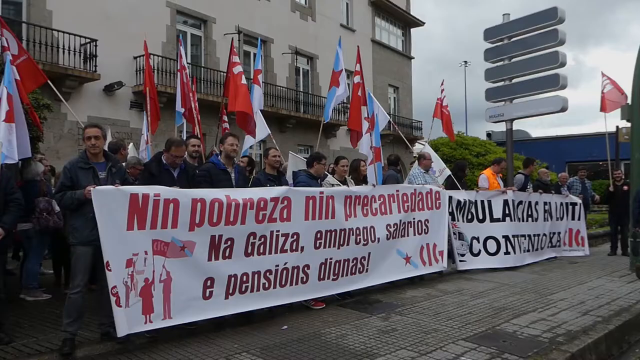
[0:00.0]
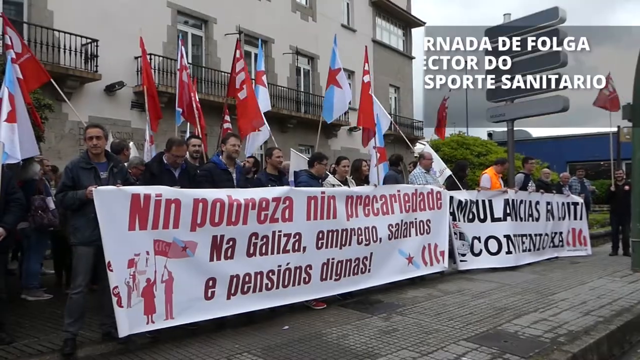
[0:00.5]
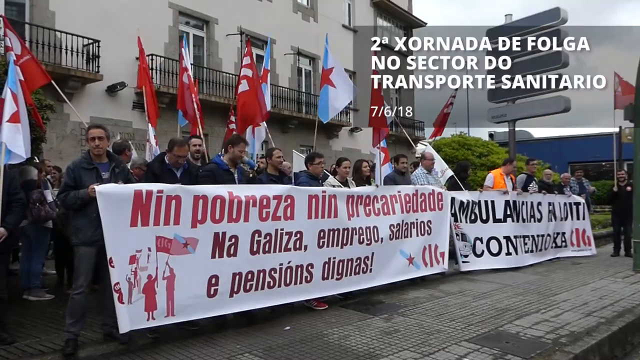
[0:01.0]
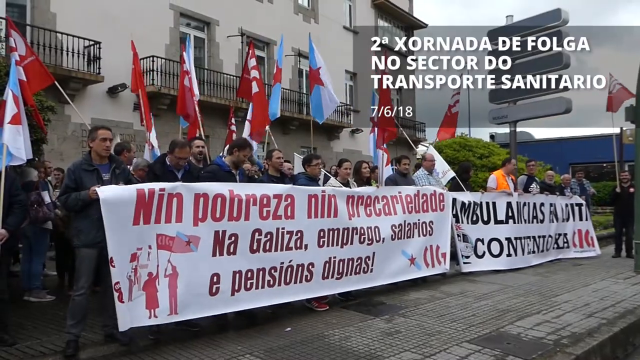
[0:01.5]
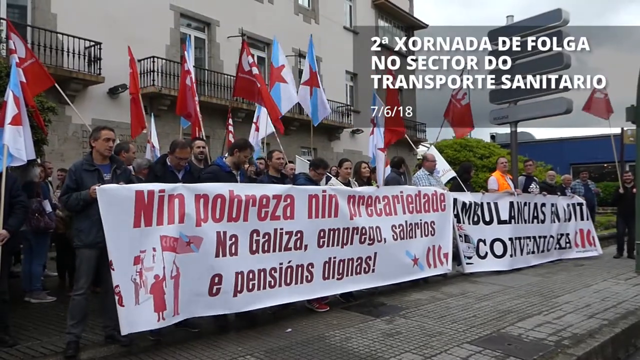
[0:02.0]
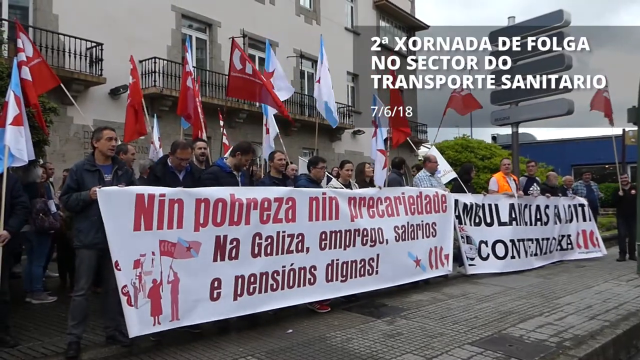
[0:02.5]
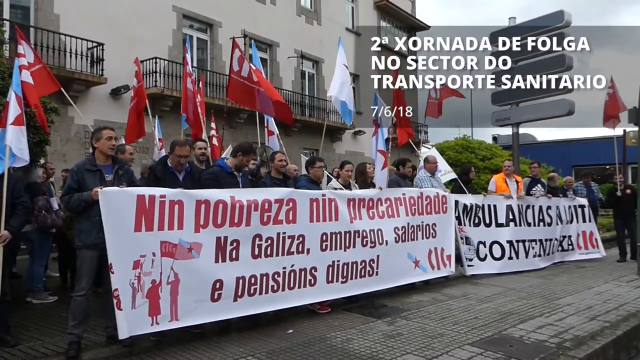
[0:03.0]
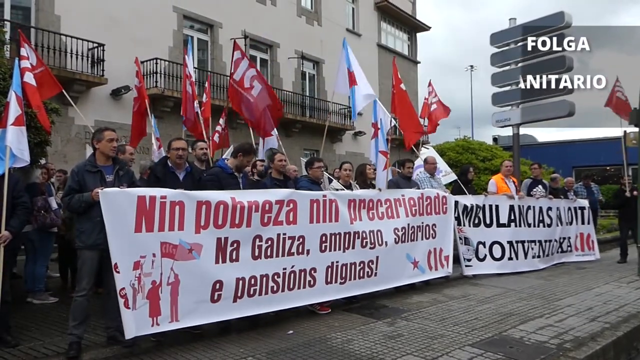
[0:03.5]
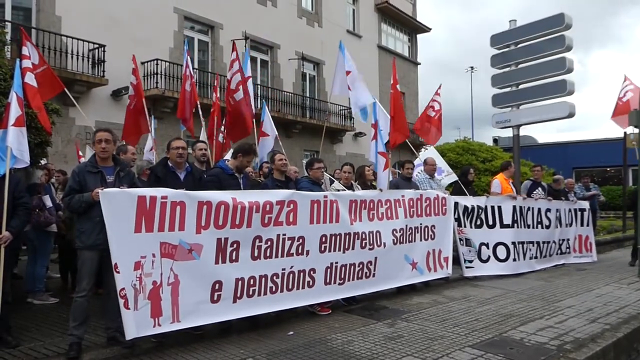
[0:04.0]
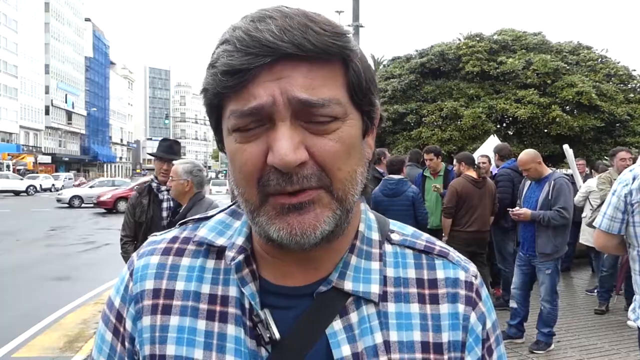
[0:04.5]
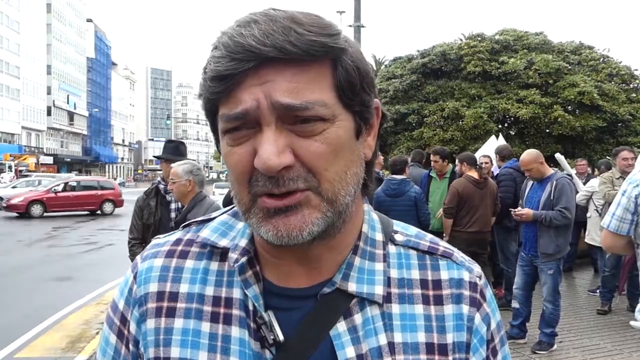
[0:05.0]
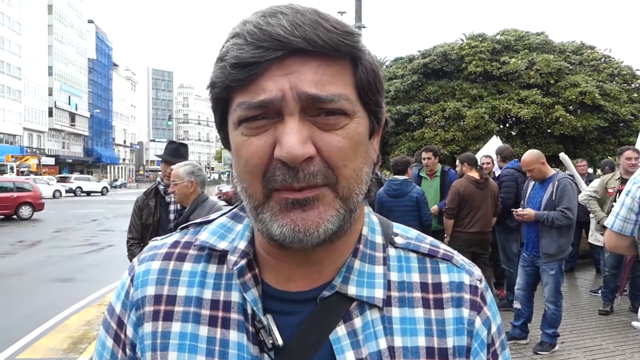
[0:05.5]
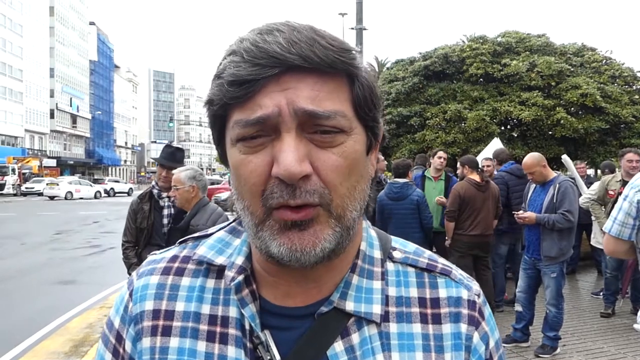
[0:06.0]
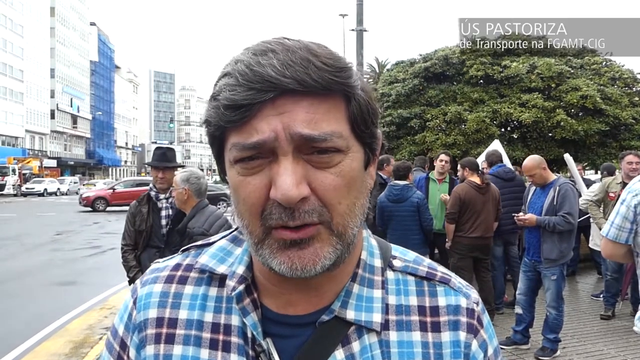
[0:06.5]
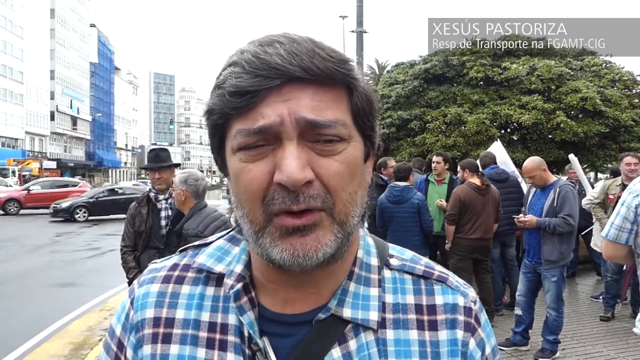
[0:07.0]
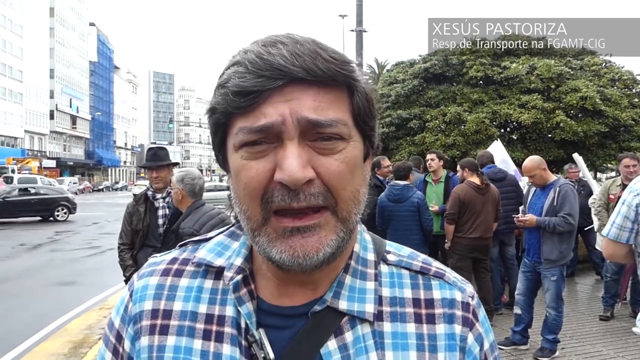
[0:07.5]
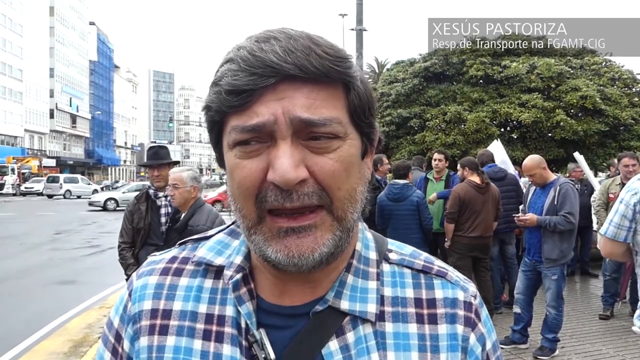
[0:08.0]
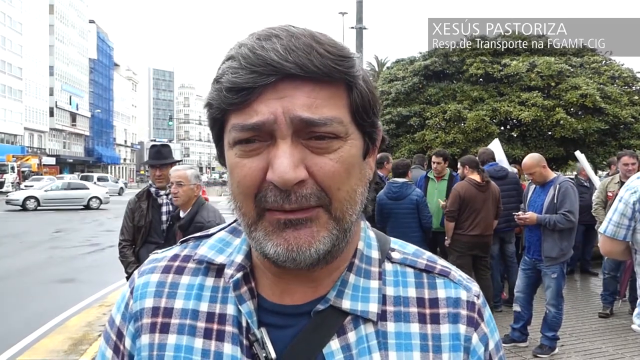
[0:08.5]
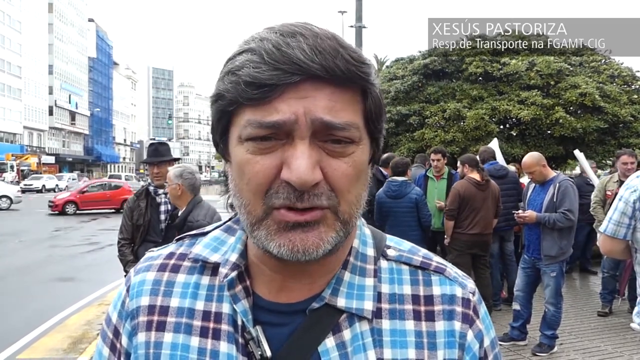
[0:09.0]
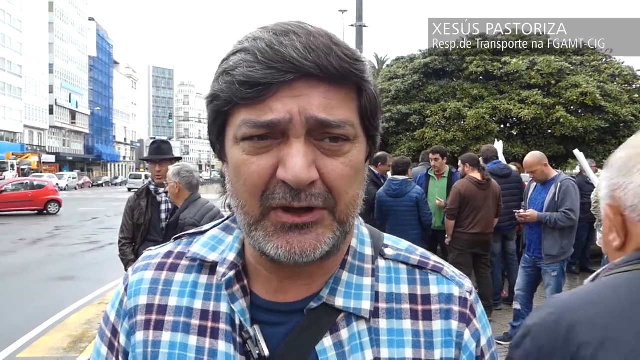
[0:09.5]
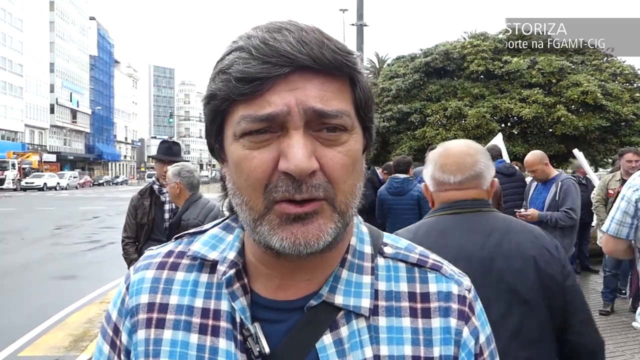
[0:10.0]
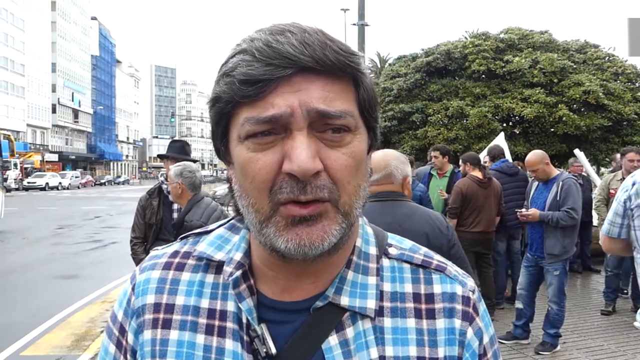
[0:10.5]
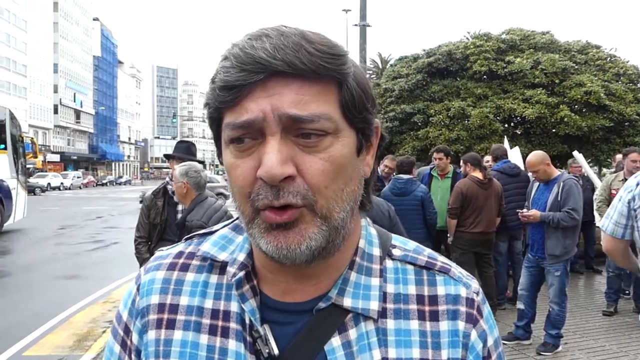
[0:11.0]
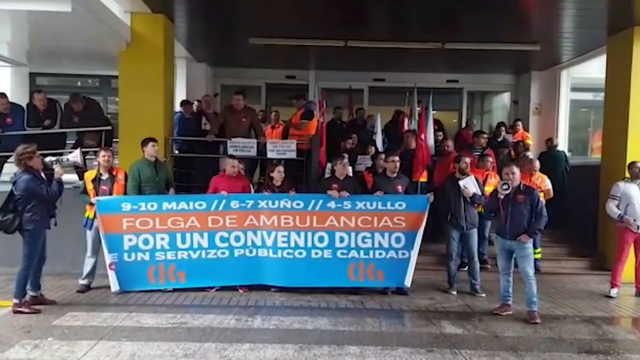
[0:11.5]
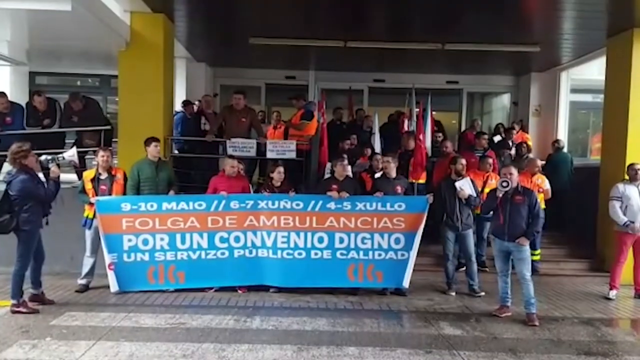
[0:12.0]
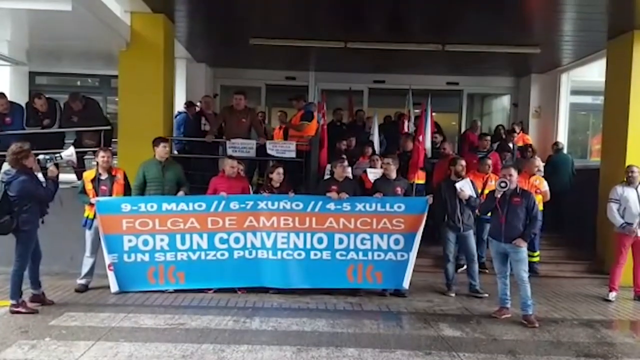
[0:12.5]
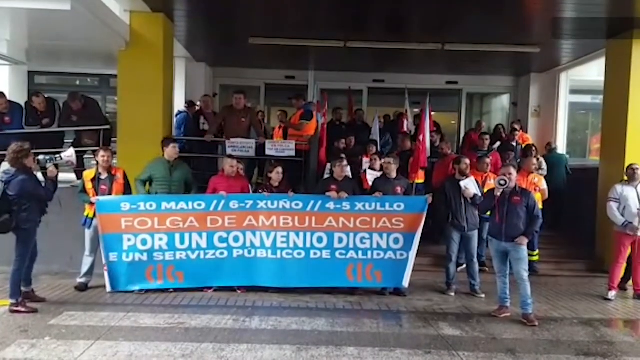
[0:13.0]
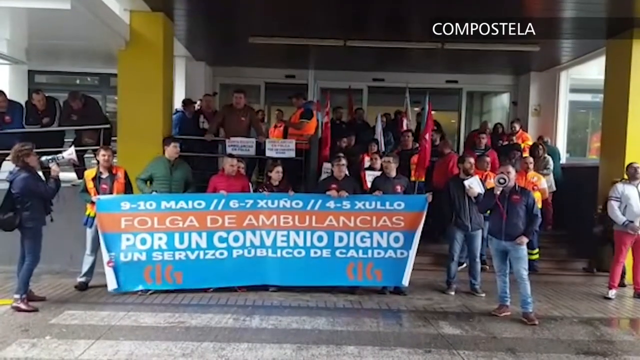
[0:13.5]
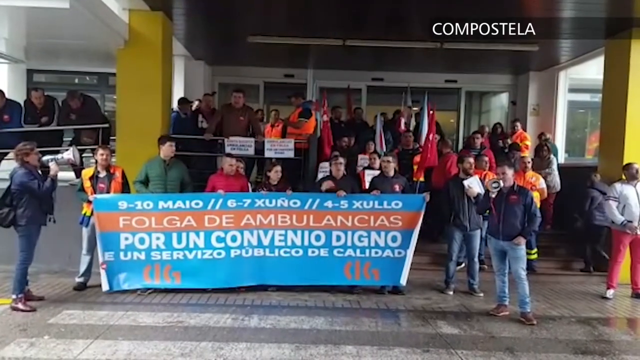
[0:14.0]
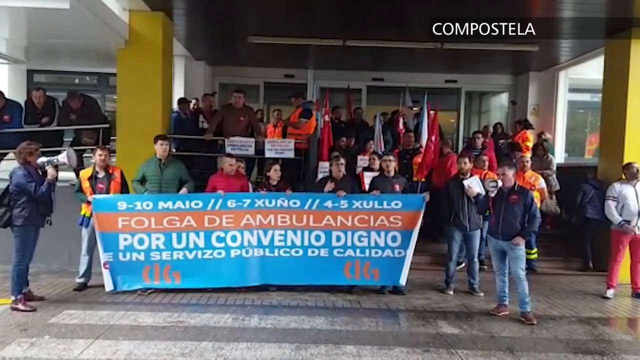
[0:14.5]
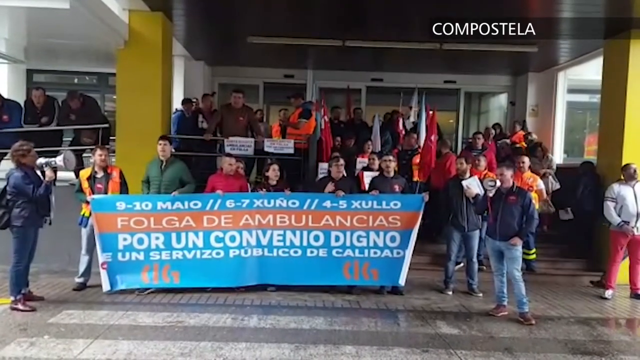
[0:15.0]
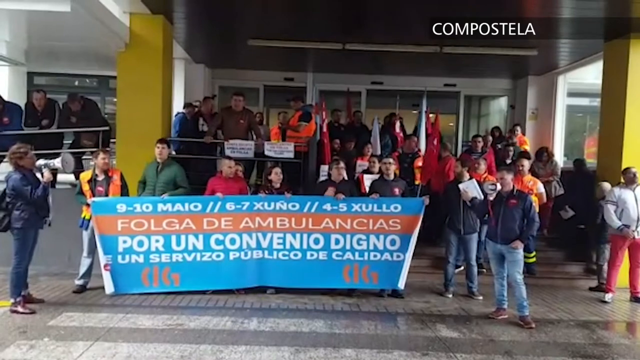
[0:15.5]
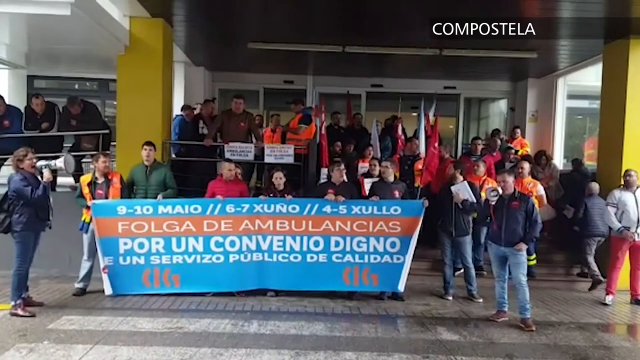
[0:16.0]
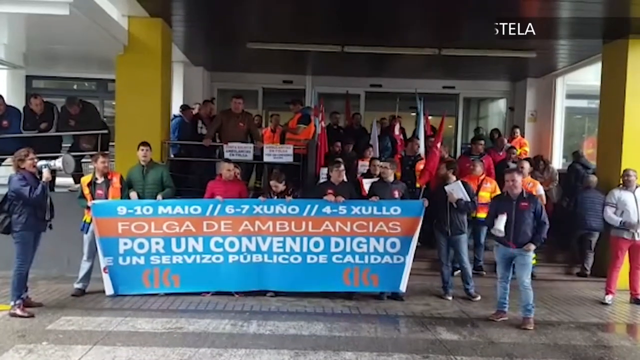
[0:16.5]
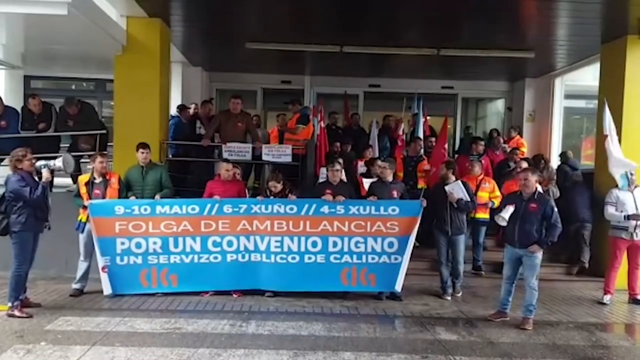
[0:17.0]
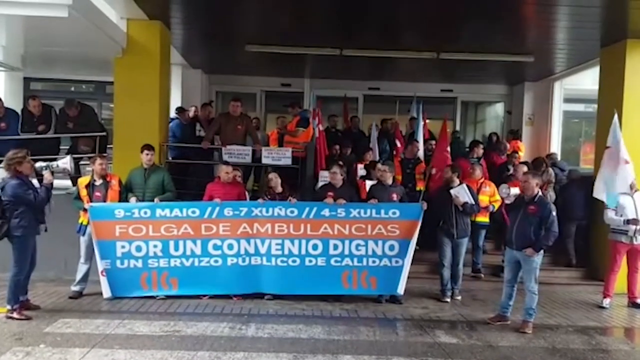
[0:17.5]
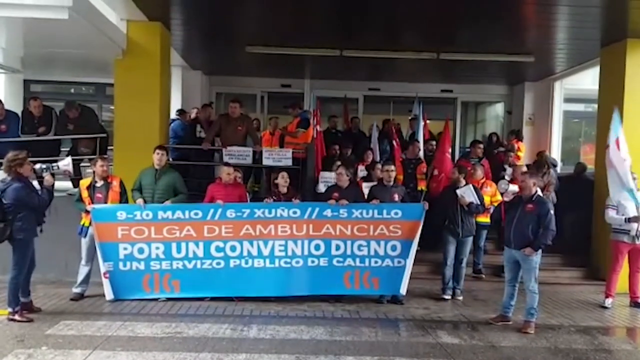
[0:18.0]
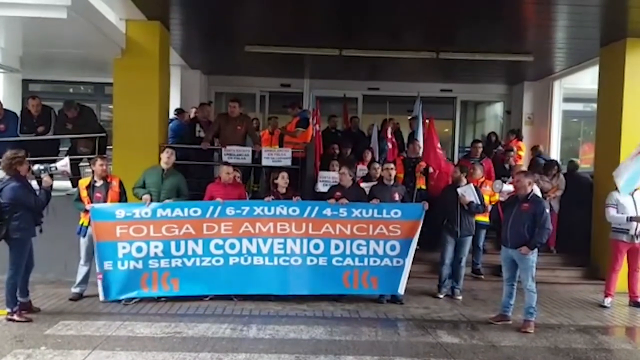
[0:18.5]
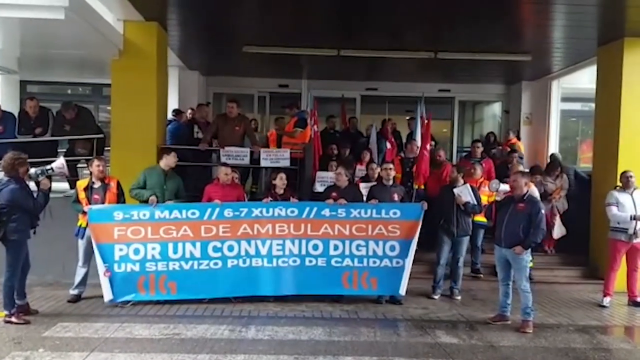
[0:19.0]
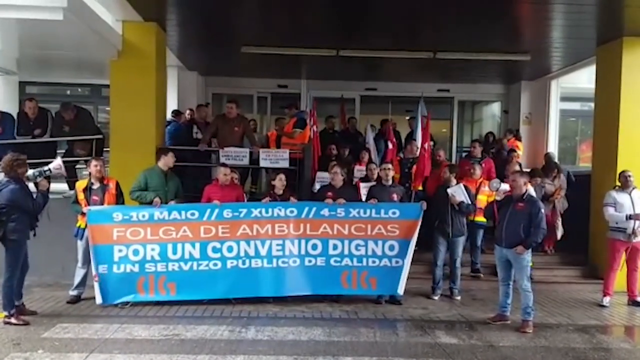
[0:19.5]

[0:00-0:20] A group of people demonstrates on the side of a road, in front of some three-storey residential buildings whose second storey has a balcony around it. The demonstrators are mainly men, with a few women. They have two big banners, apparently in Spanish: one mentions salaries and pensions and the other mentions ambulances, so possibly the ambulance service is on strike. Text appears in the top right corner giving the date as the 7th of June 2018 and mentioning the transport sector. There are a lot of flags: red flags, and white and blue flags with red stars on them. A man wearing a blue checked shirt, named Jesus Pastoriza, is then interviewed while he stands on the street. There are a few cars on the road and some very tall buildings, one of which is completely covered in something kind of blue.